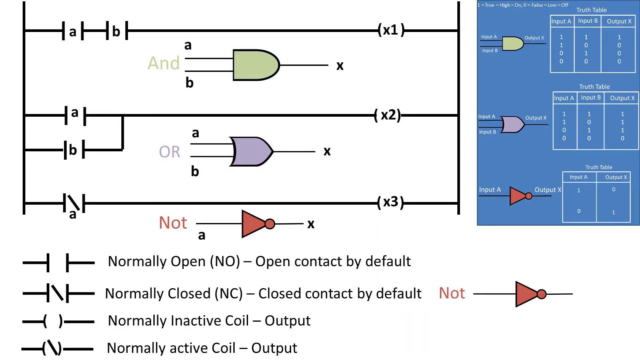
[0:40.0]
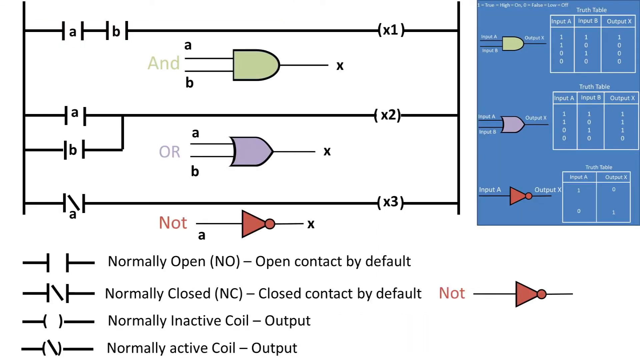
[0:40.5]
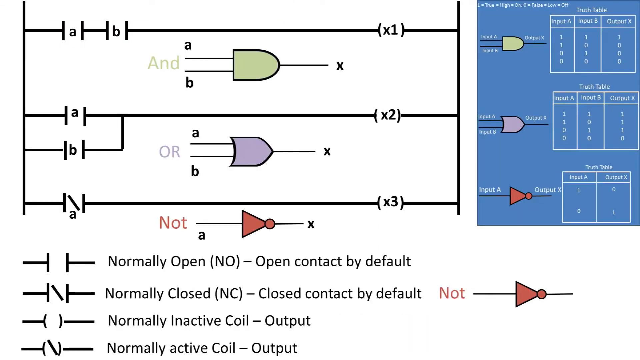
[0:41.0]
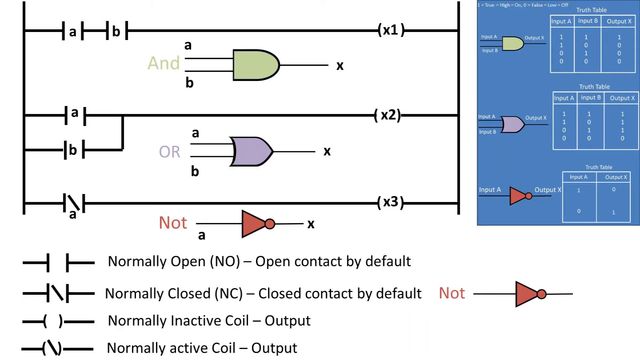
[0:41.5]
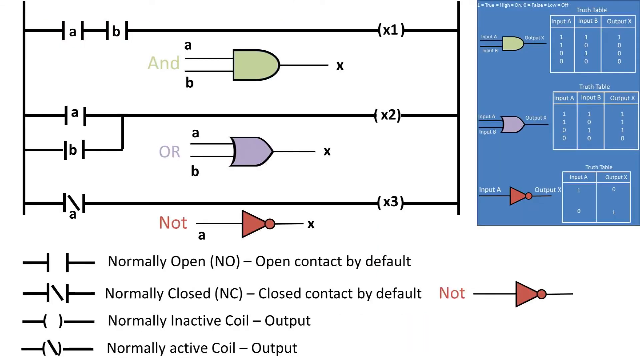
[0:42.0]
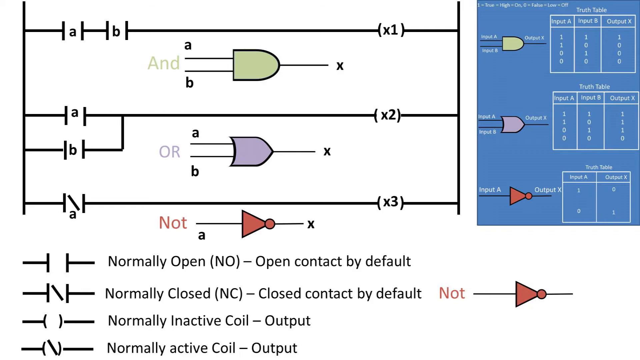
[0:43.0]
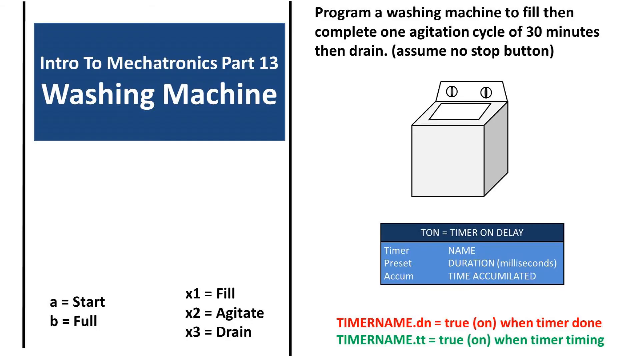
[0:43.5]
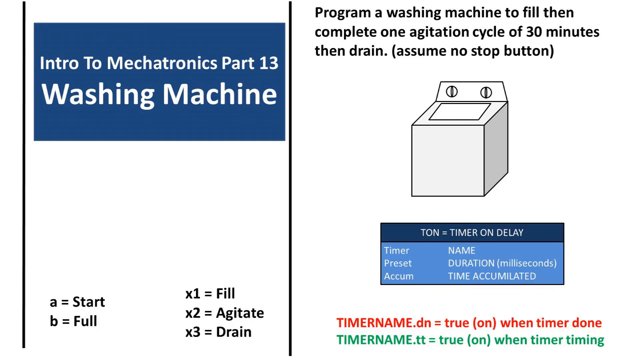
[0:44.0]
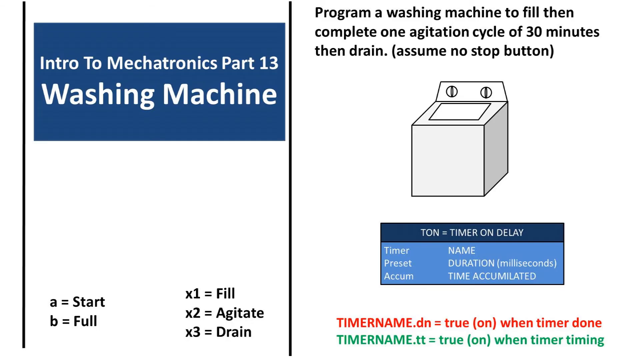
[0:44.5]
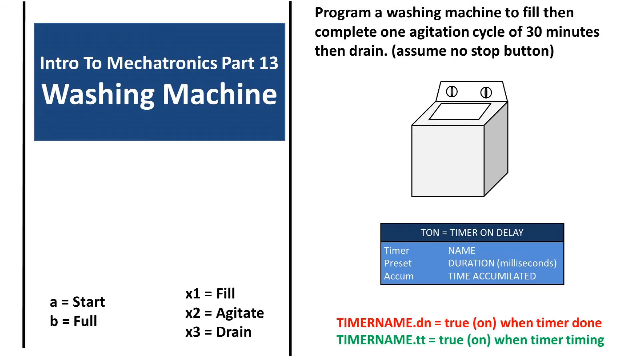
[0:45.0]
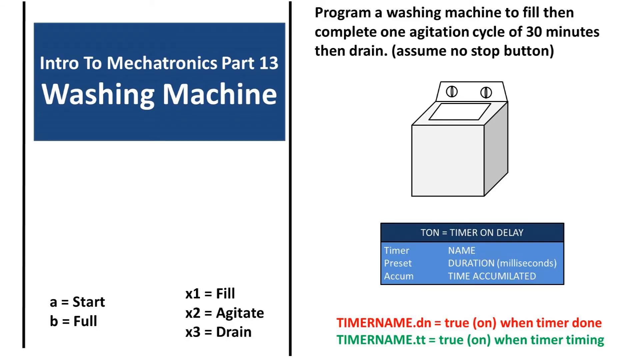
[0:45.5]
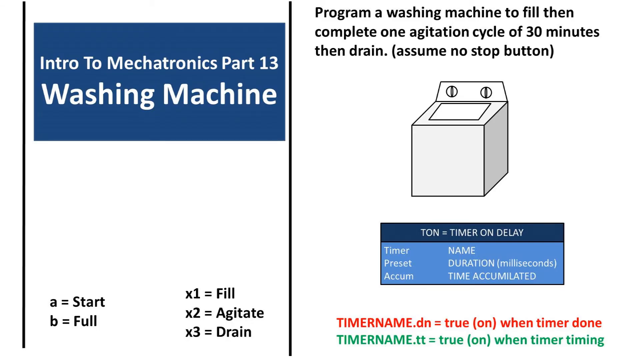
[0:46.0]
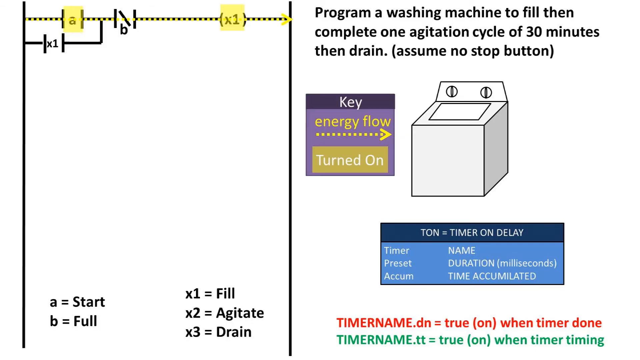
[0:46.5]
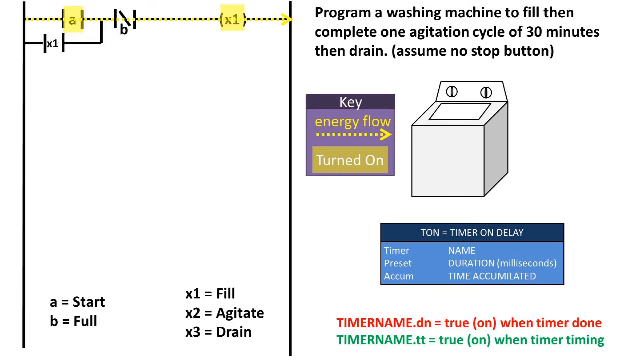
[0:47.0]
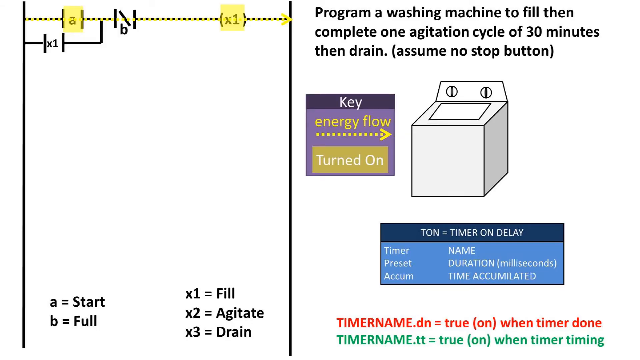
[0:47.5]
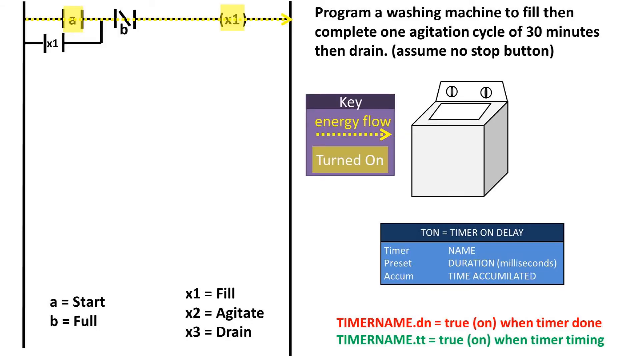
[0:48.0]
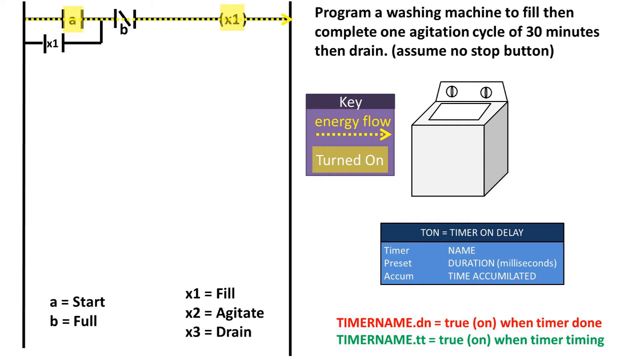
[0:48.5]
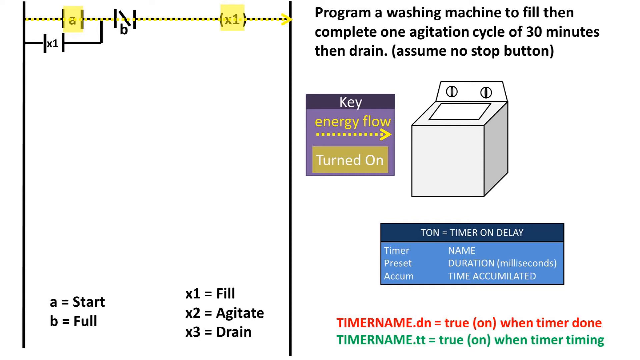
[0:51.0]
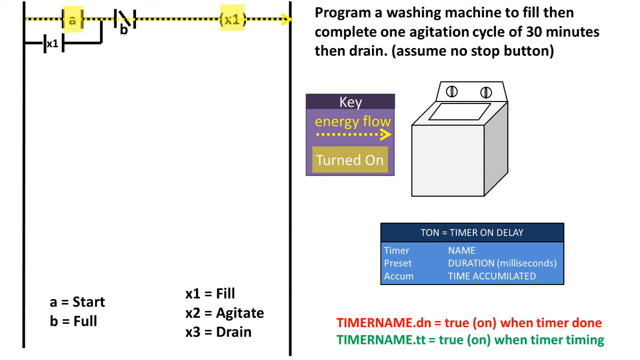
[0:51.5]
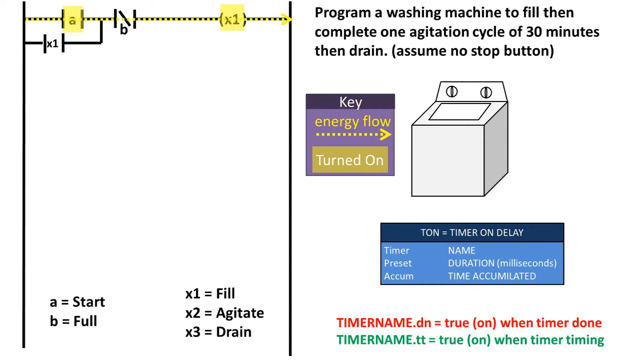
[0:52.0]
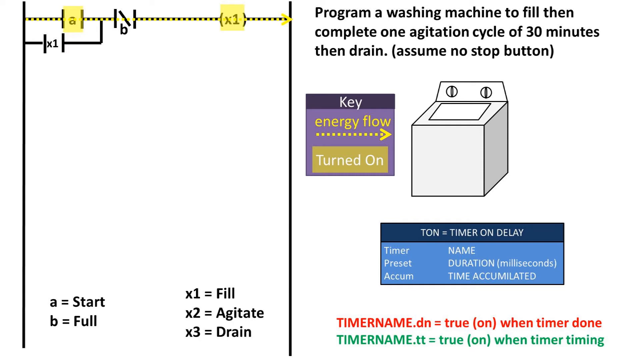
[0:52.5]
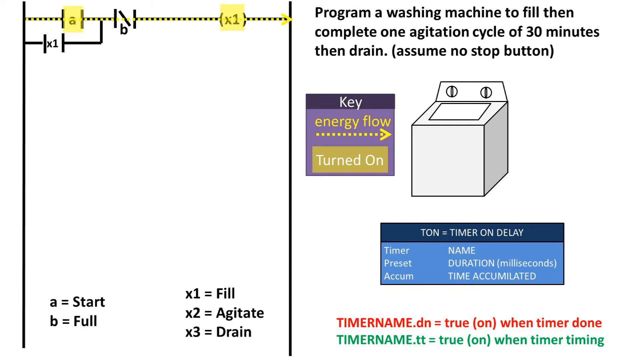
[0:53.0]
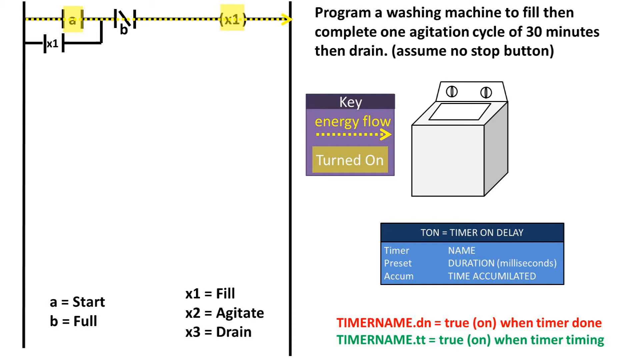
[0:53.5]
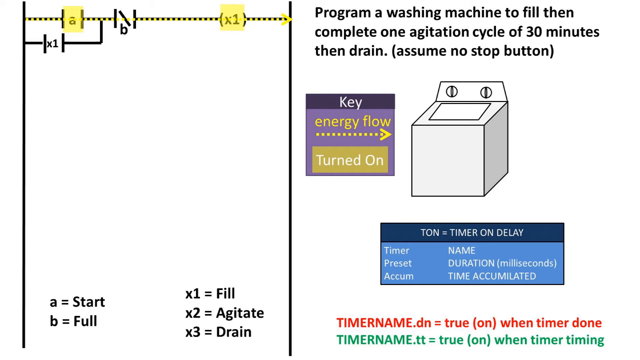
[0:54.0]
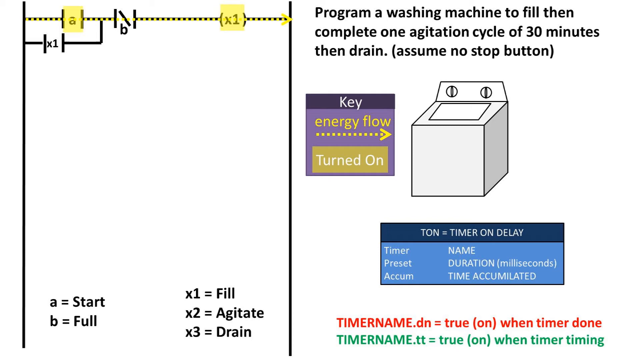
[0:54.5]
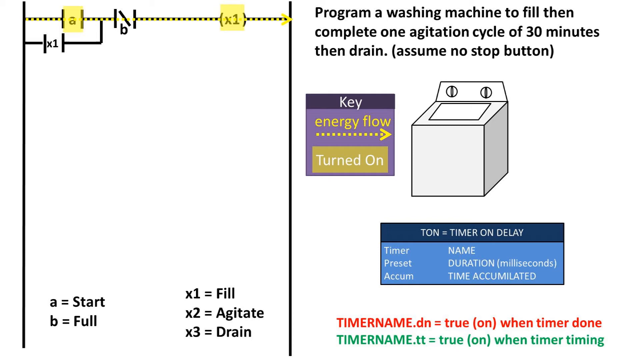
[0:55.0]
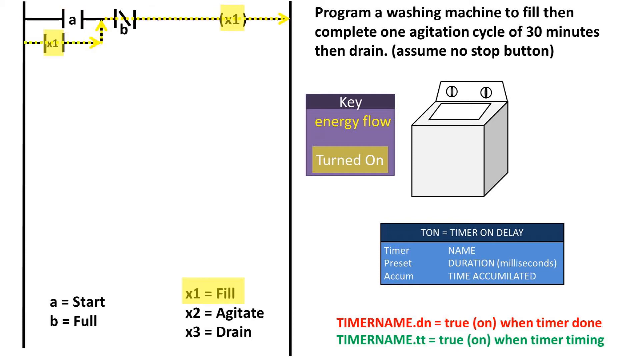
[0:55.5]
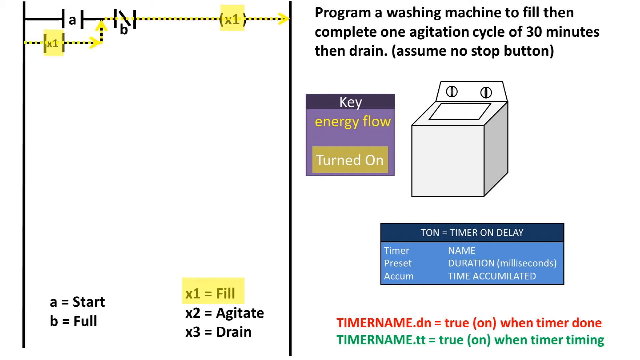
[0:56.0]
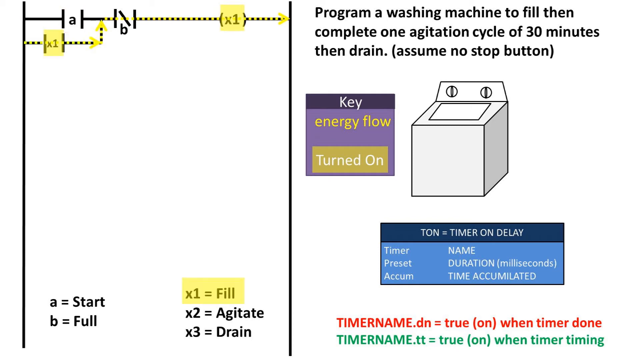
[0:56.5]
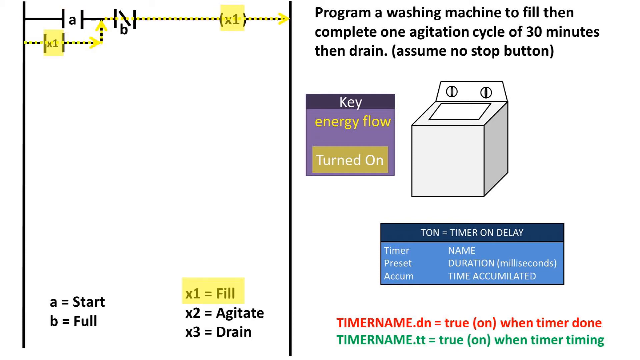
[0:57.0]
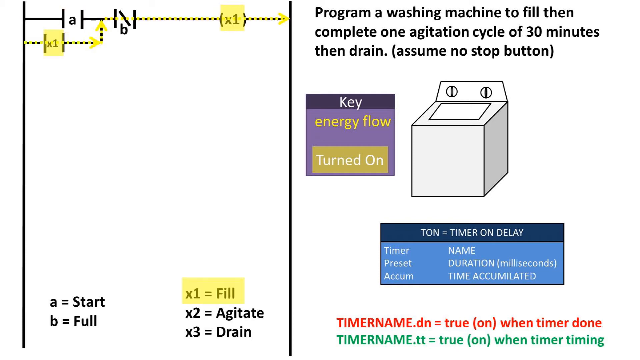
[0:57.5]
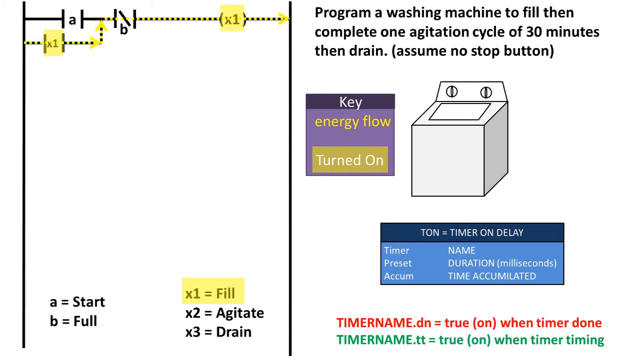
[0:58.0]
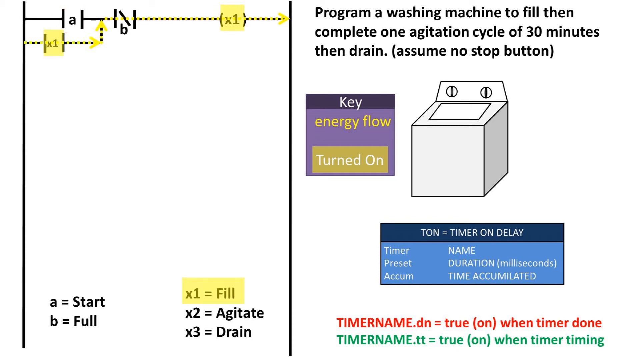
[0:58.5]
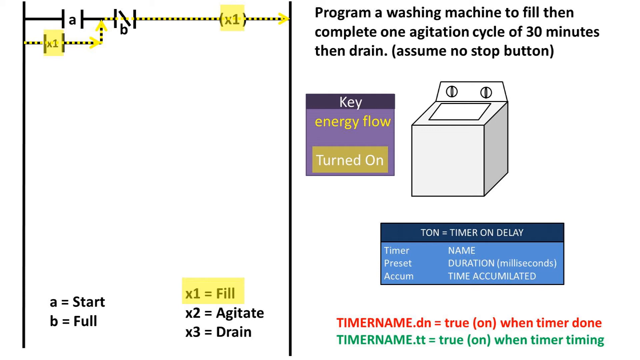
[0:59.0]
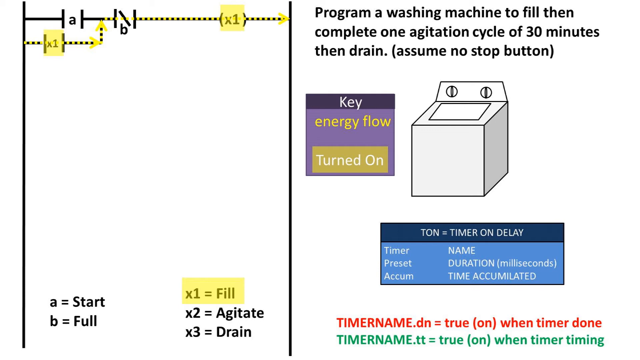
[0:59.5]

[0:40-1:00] The video stays on this slide, which shows electrical connections represented with drawings. There is an AND transistor that compares input A with input B and returns an output X: if A is true and B is also true, TRUE is returned, and if either or both are false, FALSE is returned. There is also an OR transistor, which receives input A and input B: if A or B, or both, is true, TRUE is returned, and if both are false, FALSE is returned. The electronic structure of these transistors is drawn: the AND has the letters A and B on the same line, while in the OR, A has its own line and B has its own circuit that connects later. There is also an example for the "Not" transistor, which returns the opposite value of the input.